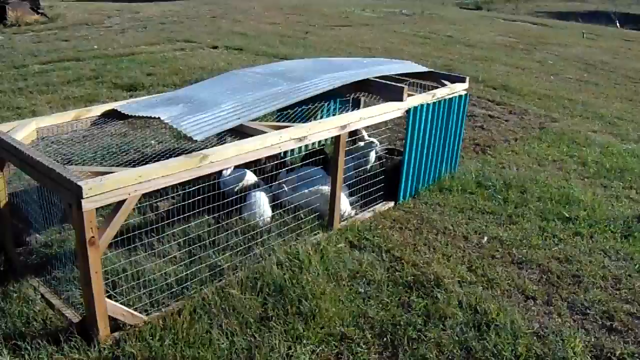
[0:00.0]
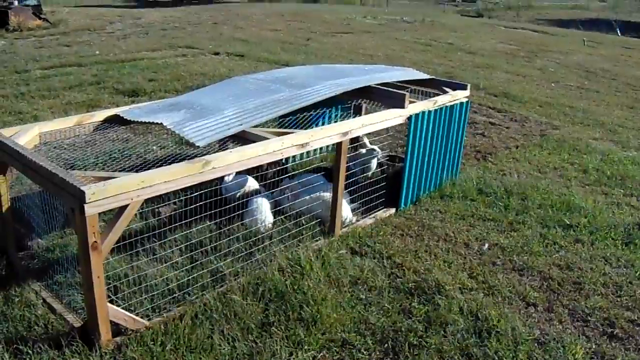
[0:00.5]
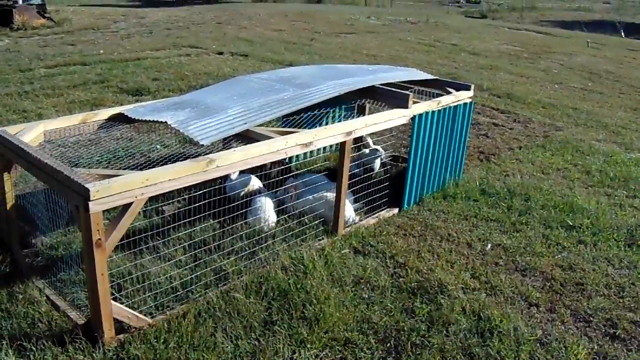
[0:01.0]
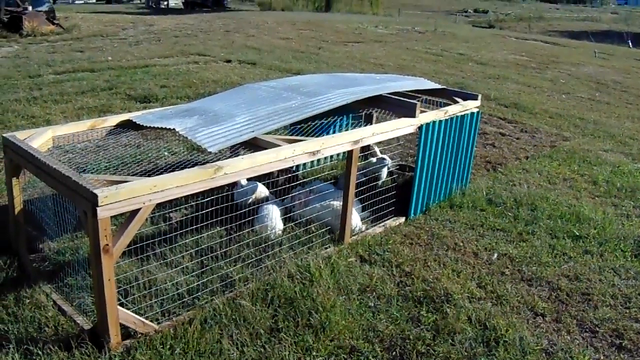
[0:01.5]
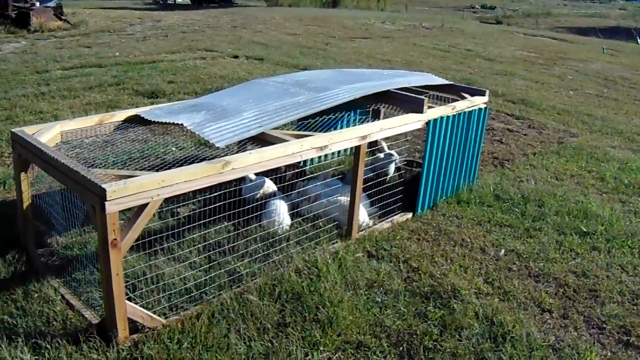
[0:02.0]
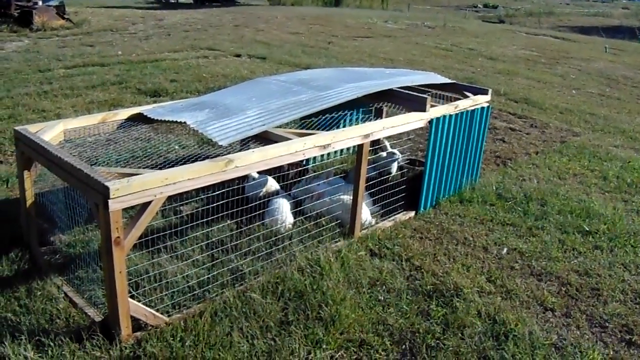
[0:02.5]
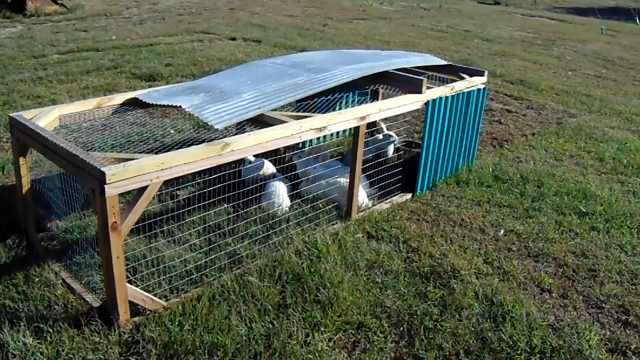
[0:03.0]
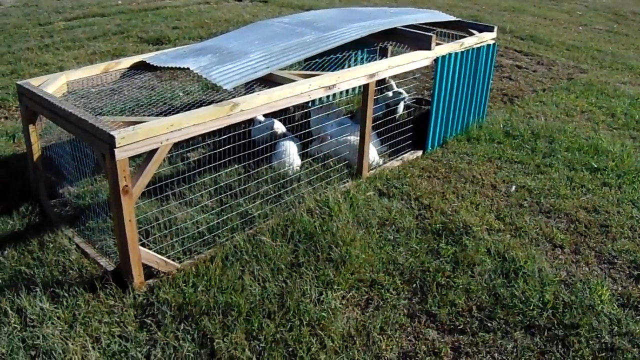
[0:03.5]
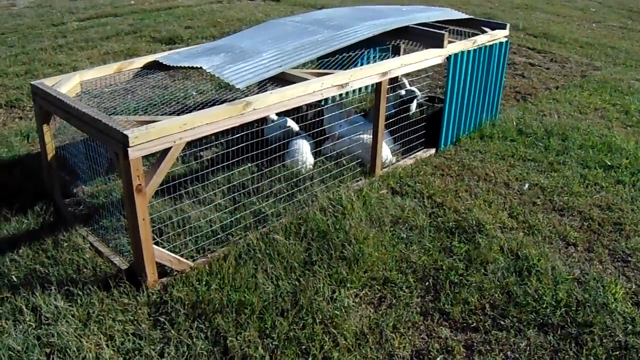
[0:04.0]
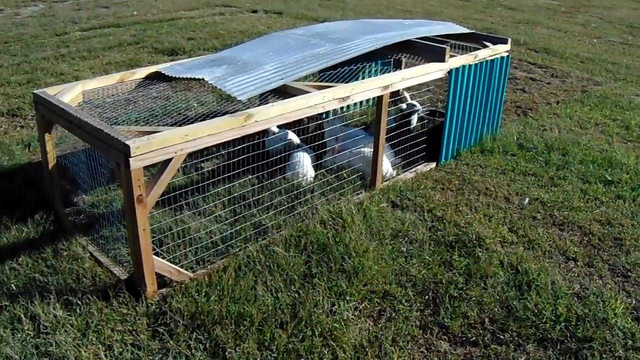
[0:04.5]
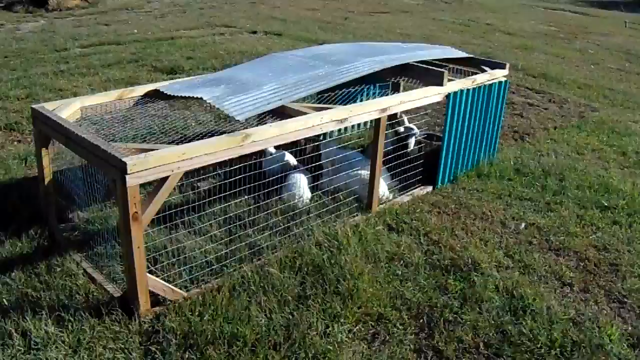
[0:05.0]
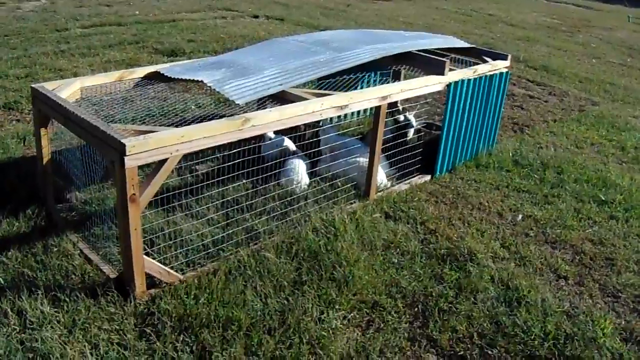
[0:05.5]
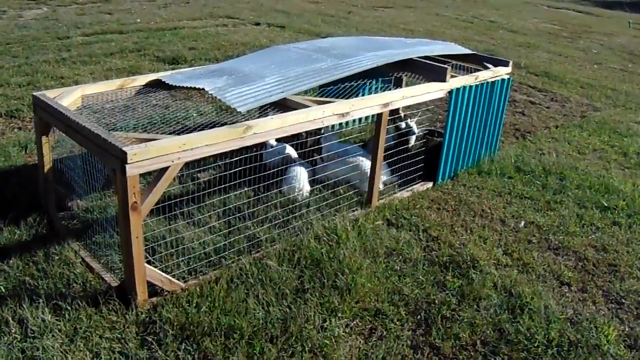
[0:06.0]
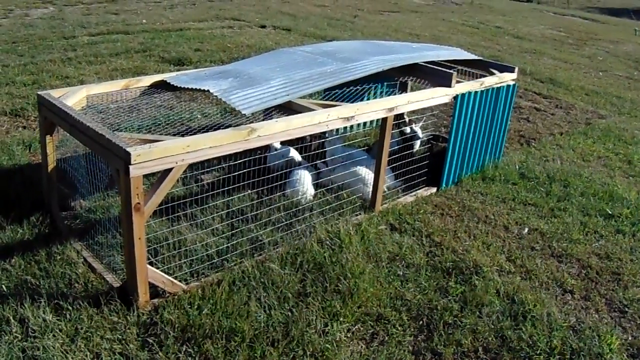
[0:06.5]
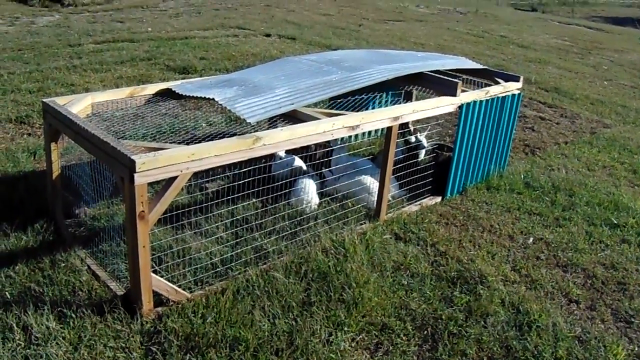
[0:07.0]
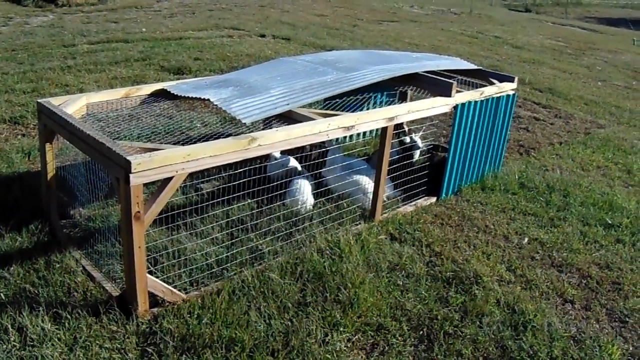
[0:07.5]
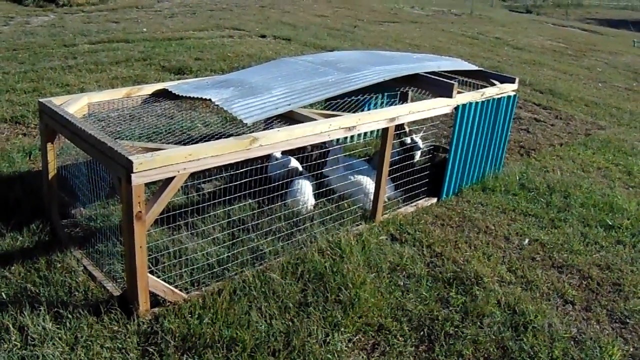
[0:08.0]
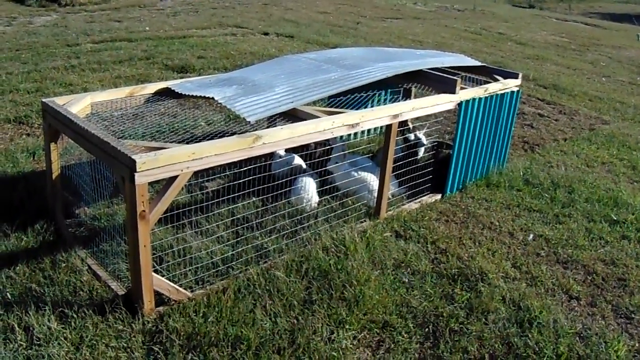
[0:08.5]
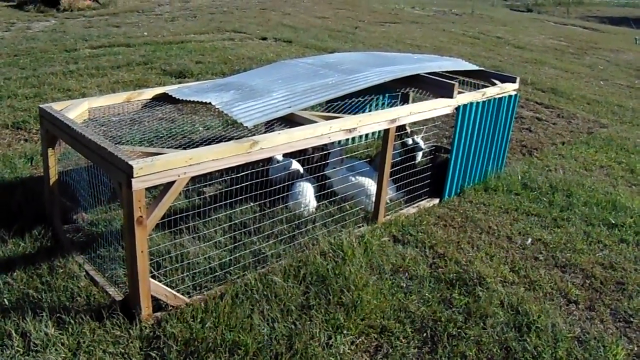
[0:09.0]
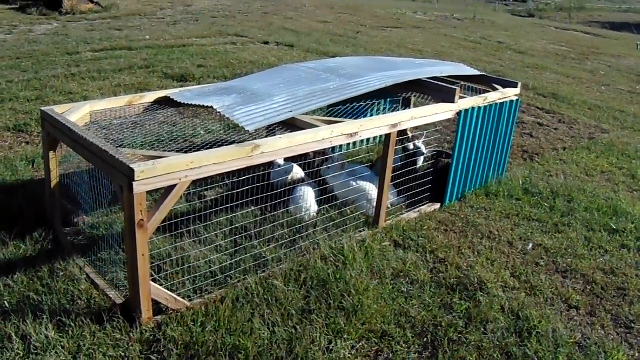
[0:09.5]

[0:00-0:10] A cage stands on a bright green lawn outdoors. It is made of a light-colored wooden frame and a metal grid of very thin wires, with a light gray iron panel at the top and light blue panels with vertical stripes at the bottom. Small white rabbits hop around inside. For a few moments, equally green hills and some buildings in the distance are visible in the background. The shot does not appear very stable and the camera shakes several times, though the image quality is very high.